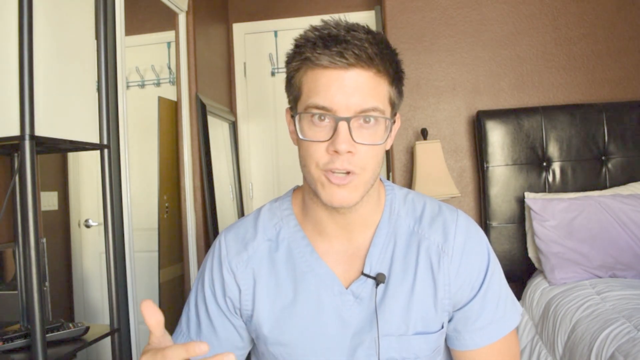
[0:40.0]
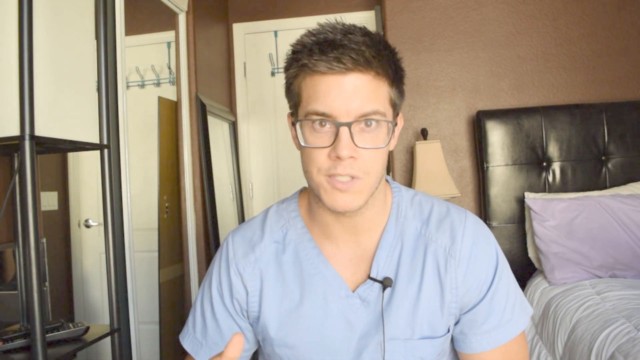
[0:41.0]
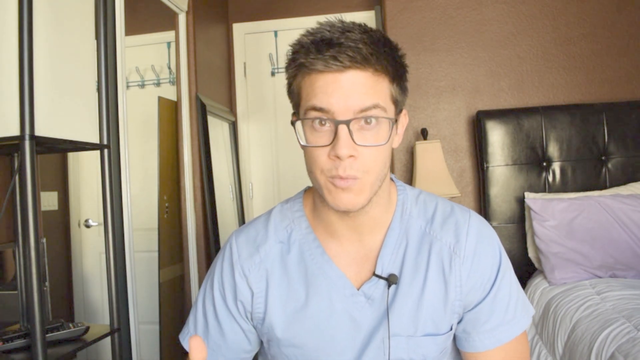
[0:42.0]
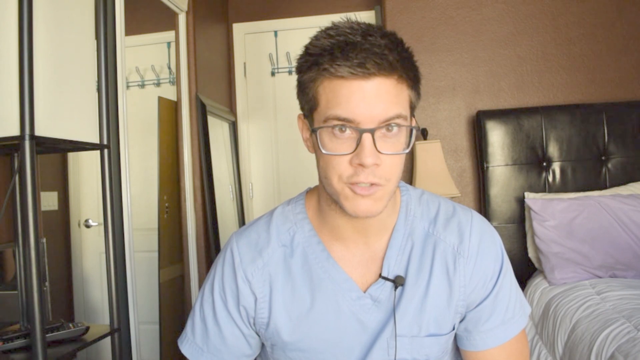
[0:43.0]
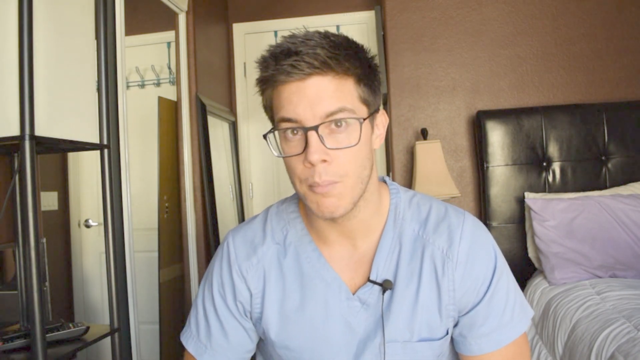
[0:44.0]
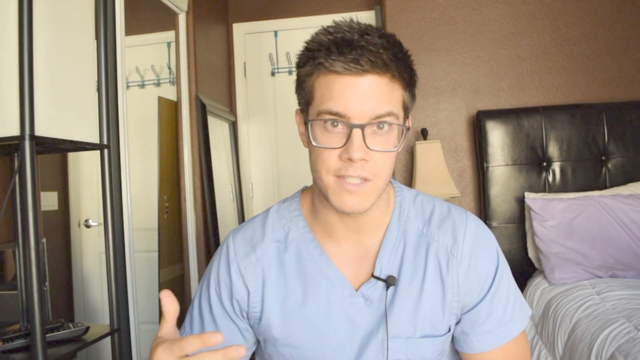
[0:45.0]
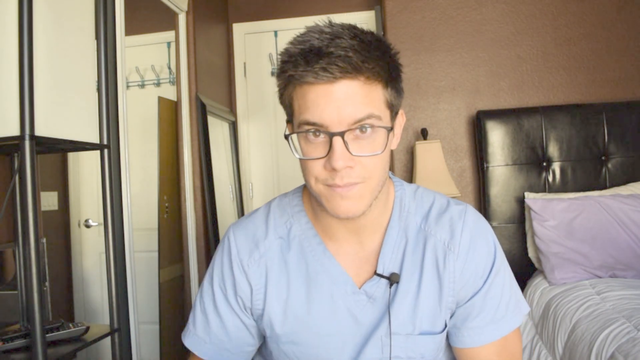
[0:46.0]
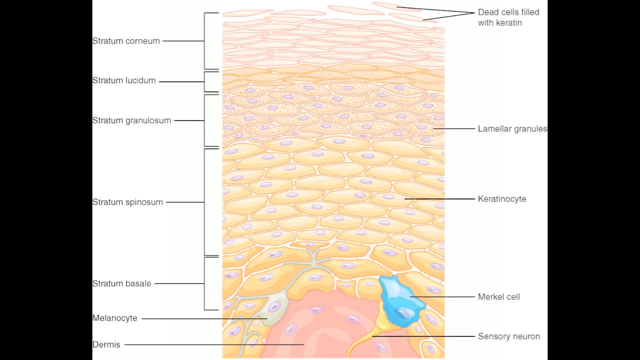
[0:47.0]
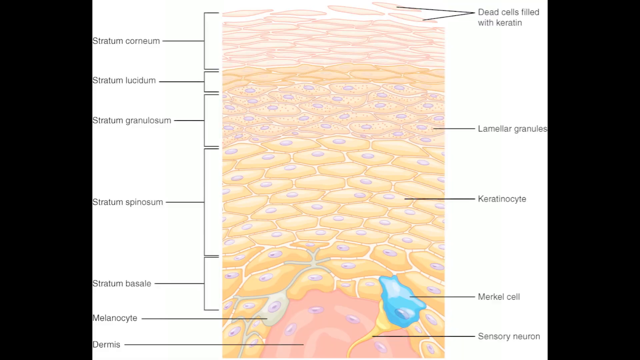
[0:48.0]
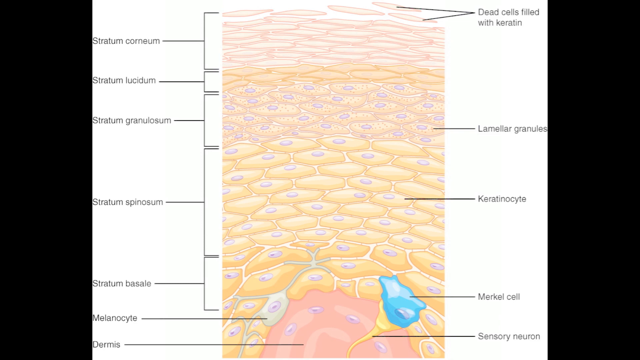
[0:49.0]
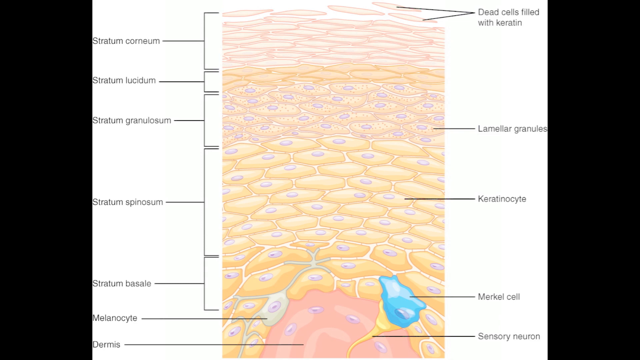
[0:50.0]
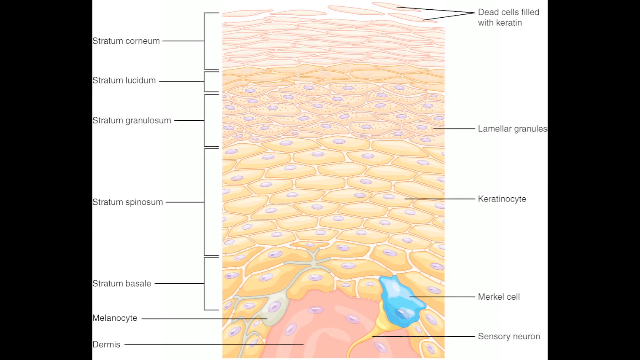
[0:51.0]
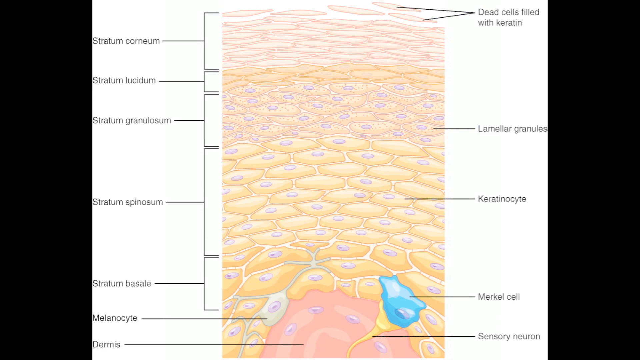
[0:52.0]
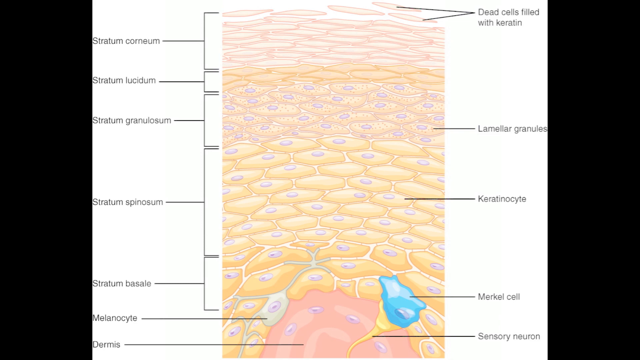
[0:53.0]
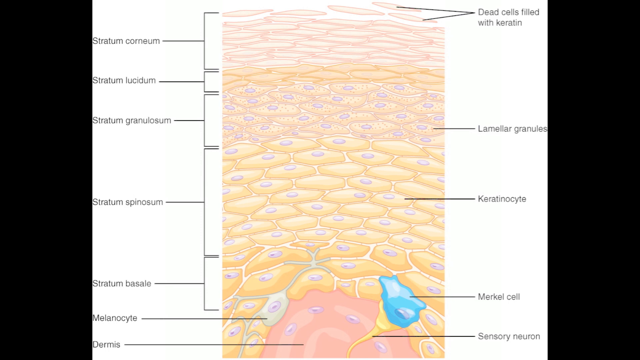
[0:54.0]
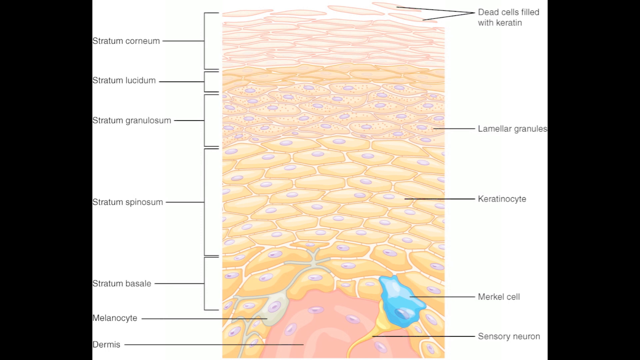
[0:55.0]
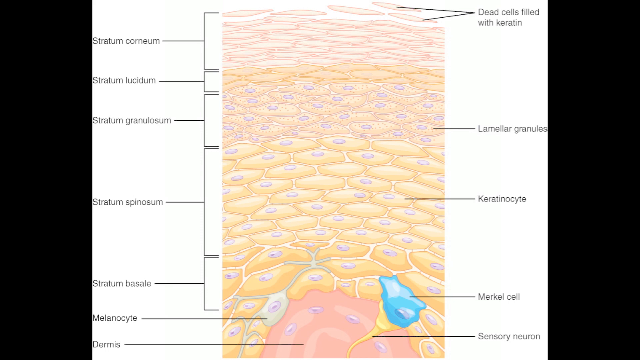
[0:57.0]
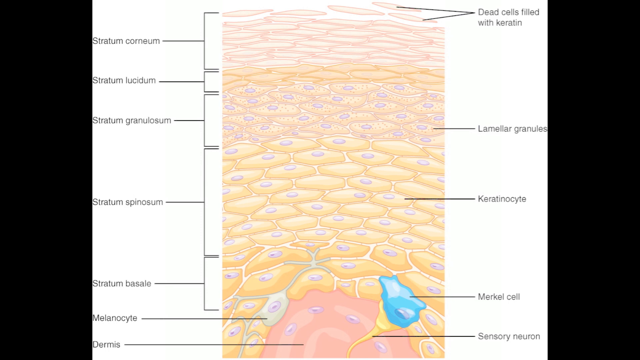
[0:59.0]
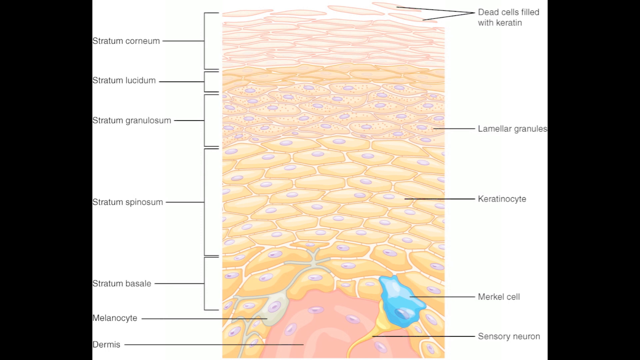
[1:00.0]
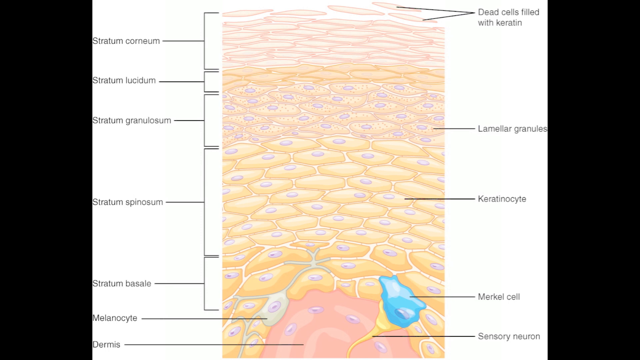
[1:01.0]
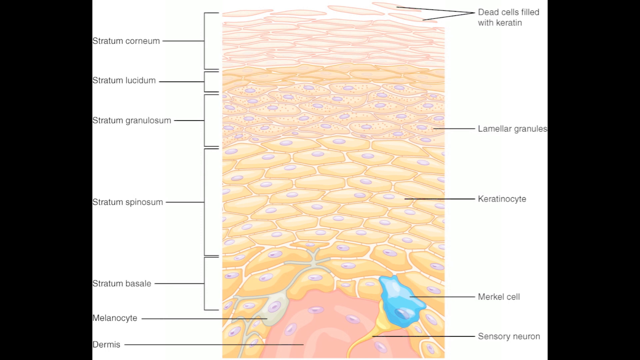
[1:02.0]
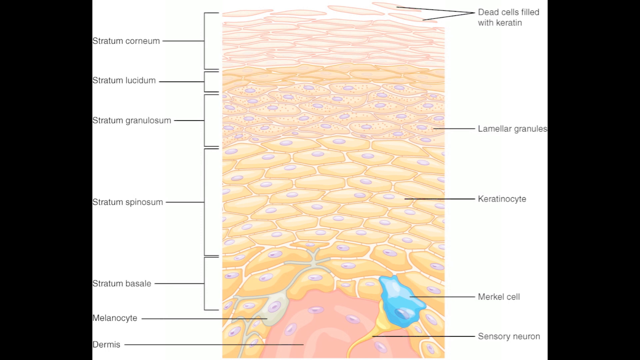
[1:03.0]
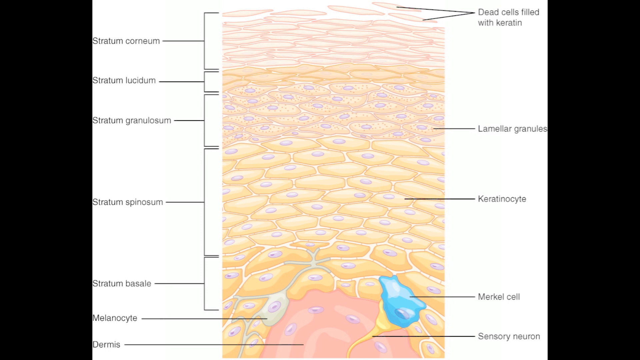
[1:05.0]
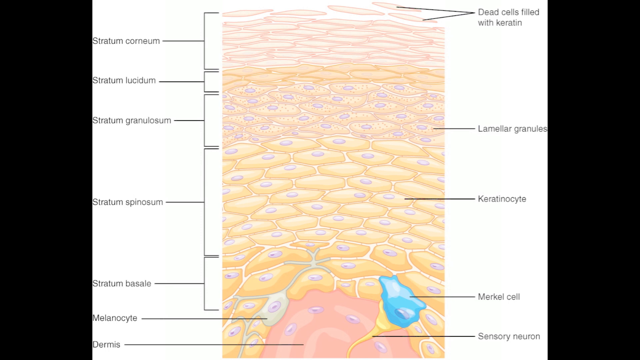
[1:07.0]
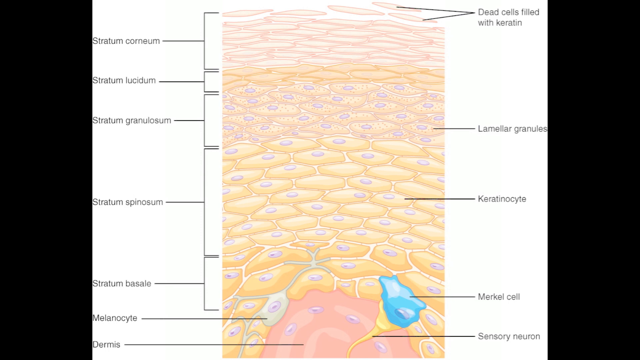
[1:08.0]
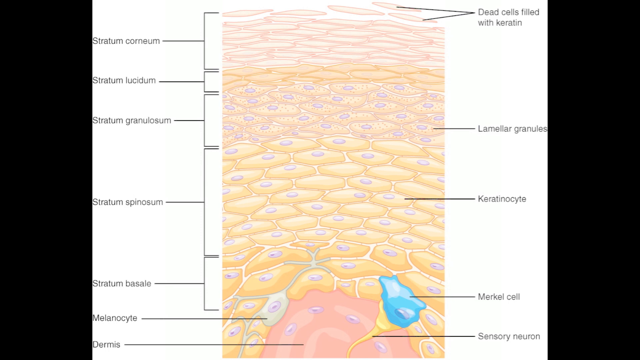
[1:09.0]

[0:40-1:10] The scene seems to be the same, with the person on the board giving lectures.